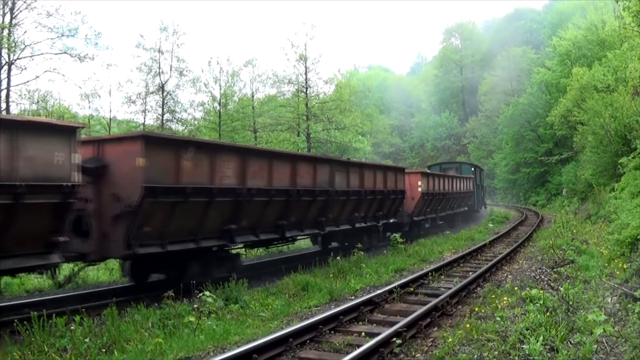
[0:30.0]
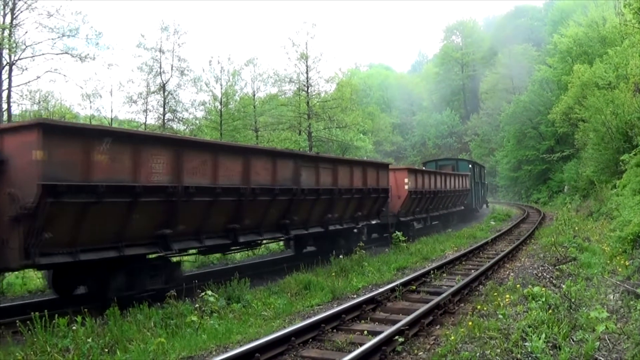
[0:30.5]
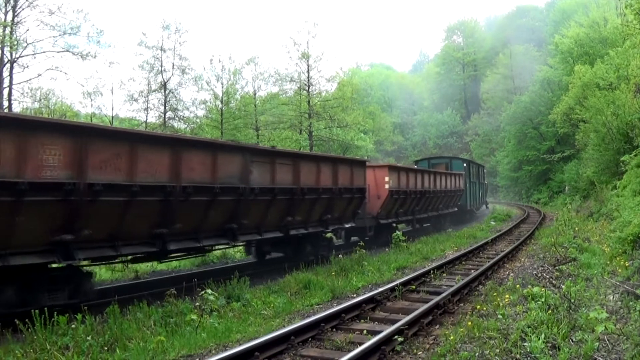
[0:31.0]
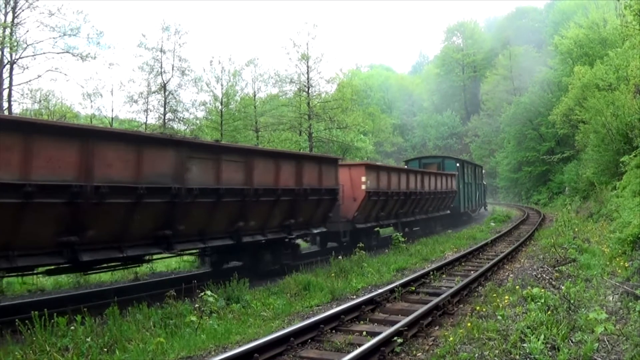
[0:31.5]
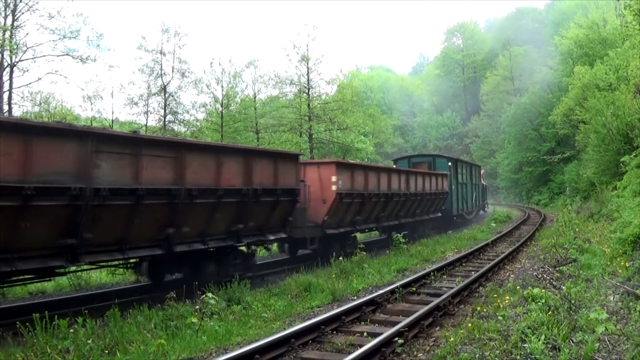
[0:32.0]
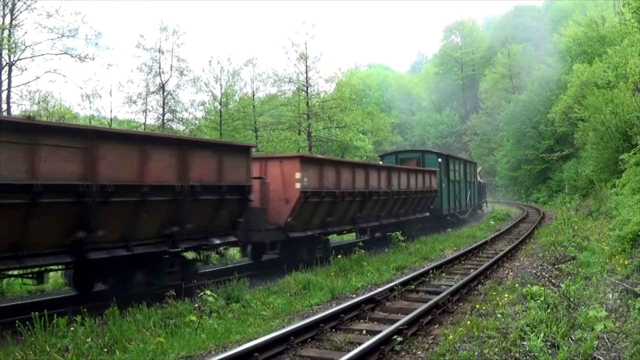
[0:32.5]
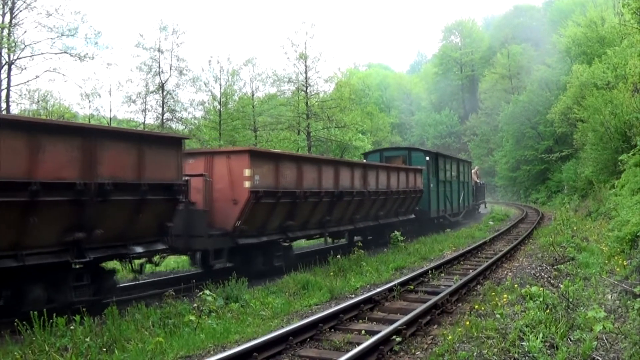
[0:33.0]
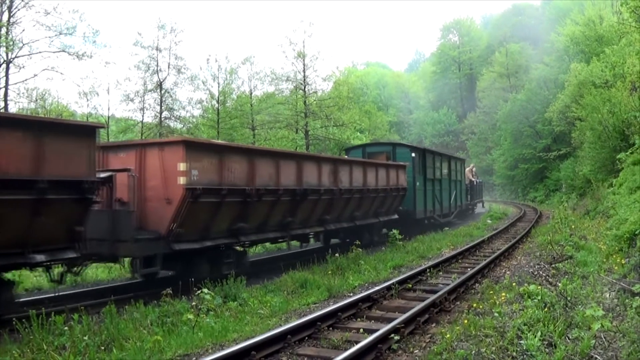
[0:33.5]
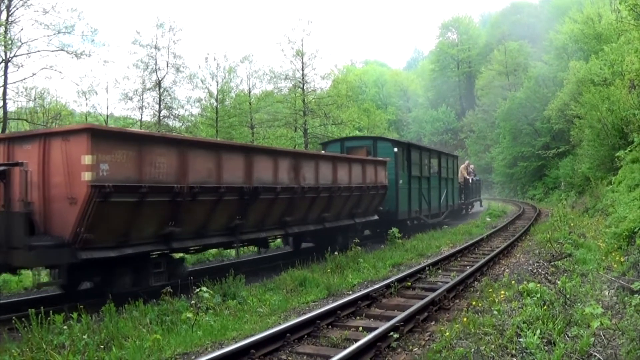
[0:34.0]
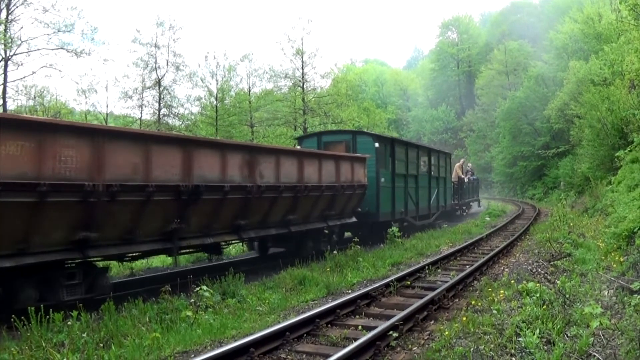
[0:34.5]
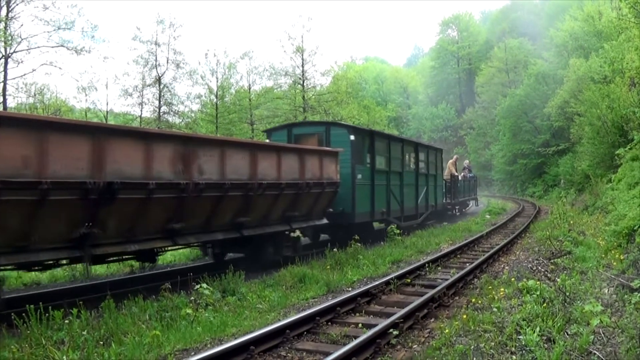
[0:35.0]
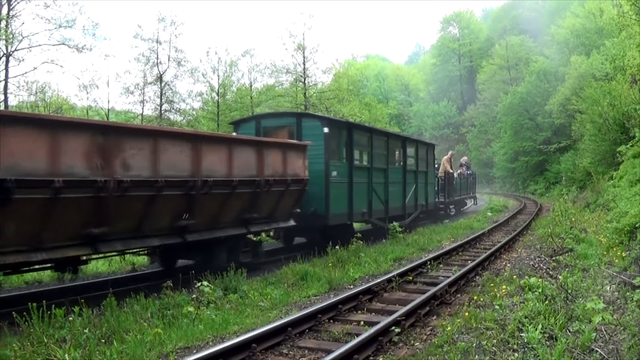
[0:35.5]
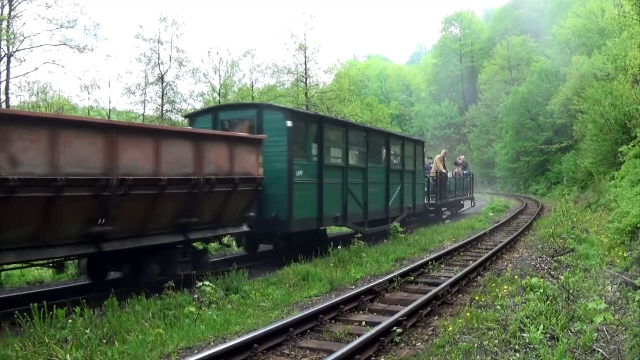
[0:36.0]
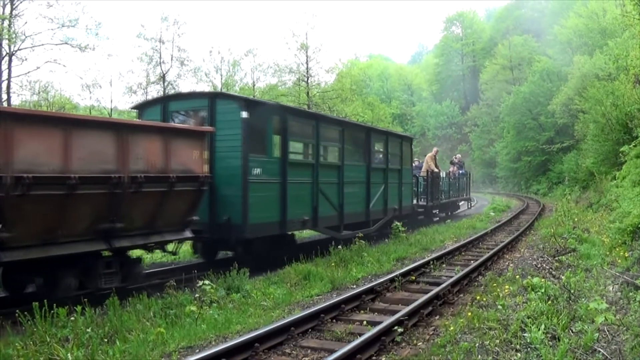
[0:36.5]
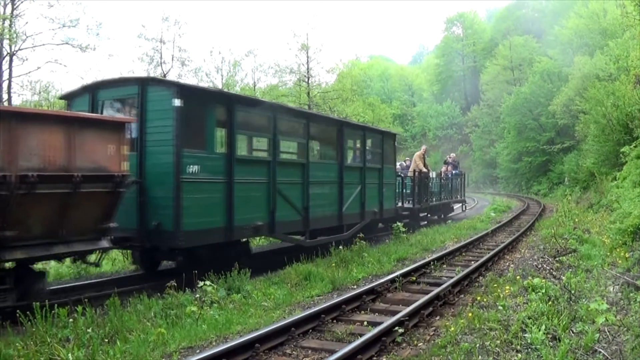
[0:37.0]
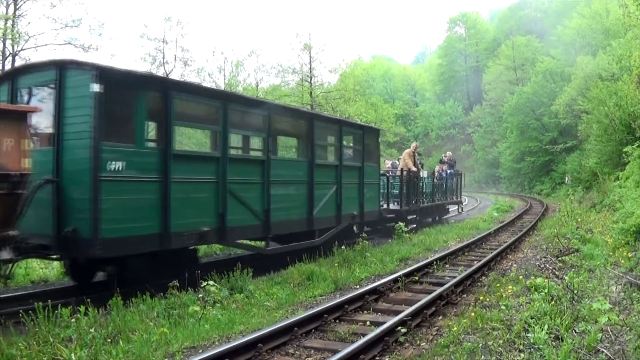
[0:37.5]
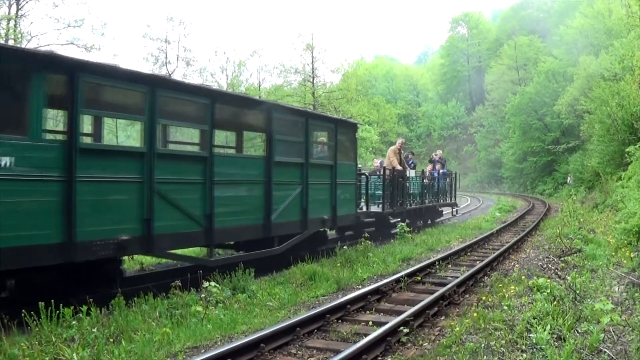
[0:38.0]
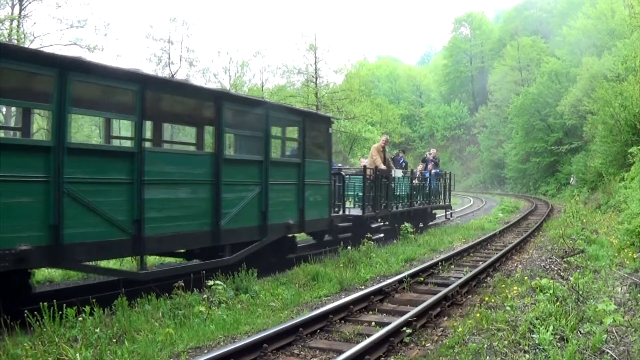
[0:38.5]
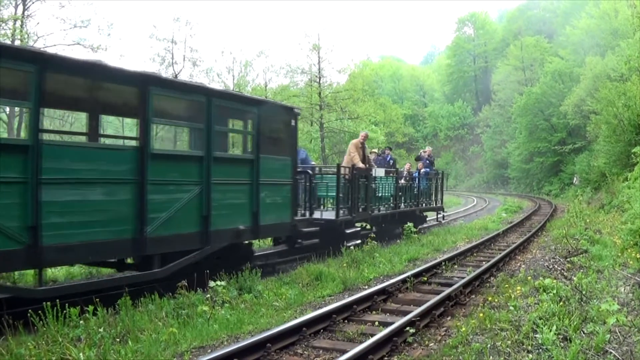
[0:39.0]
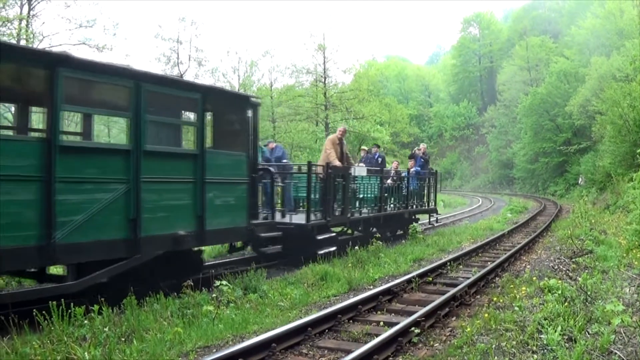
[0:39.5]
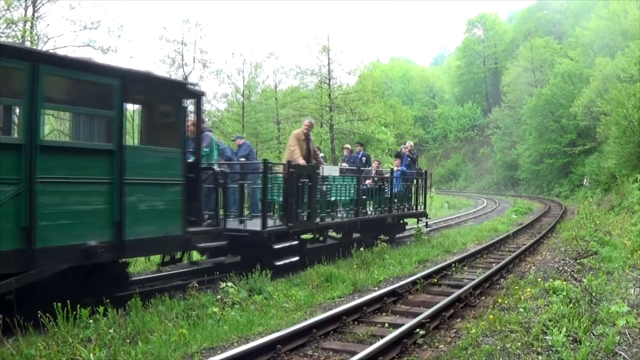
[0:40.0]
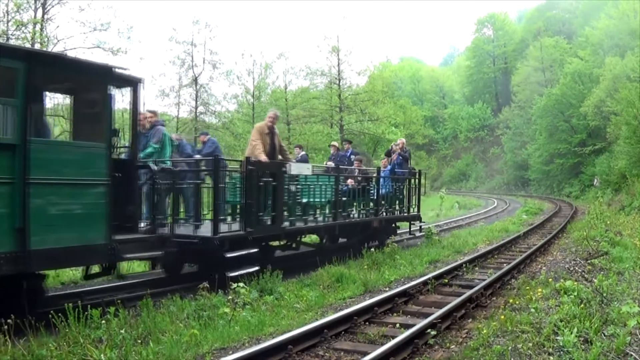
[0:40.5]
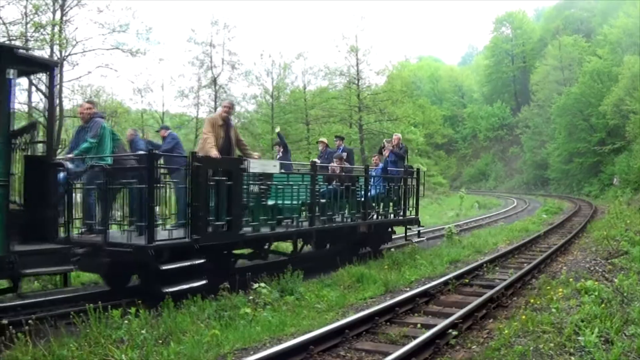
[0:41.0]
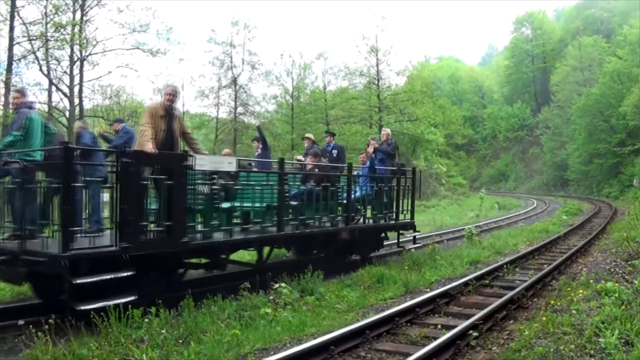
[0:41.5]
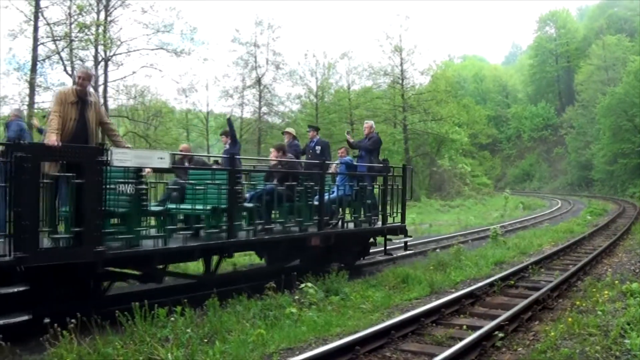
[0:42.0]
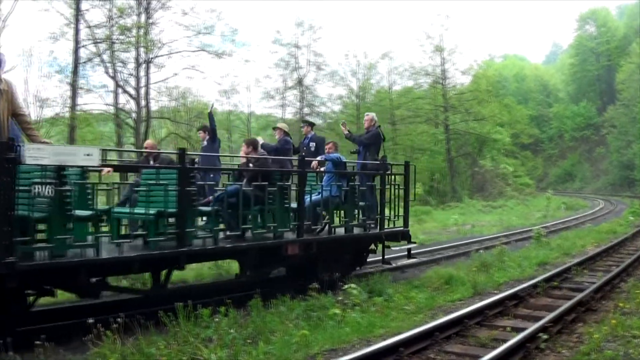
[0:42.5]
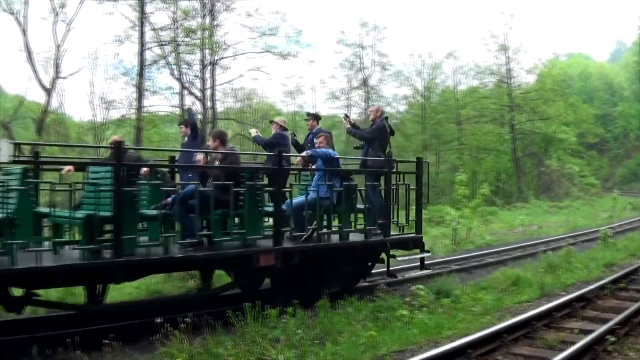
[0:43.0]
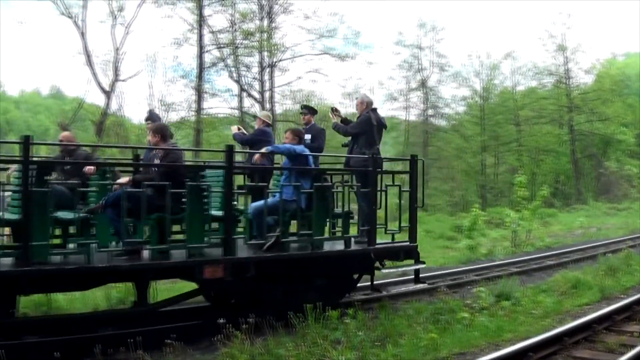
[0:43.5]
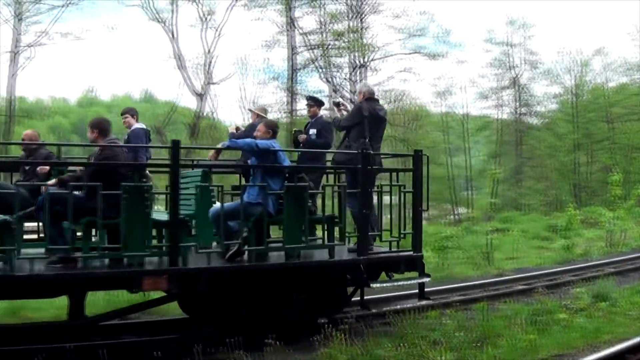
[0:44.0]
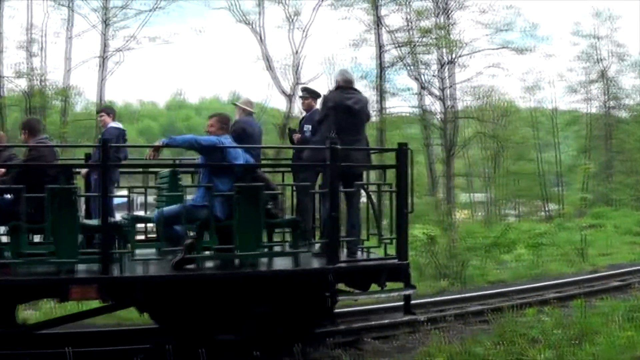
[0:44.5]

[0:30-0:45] The coal cars go by and reveal two more cars at the back of the train: a riding car and an open car, which are not coal cars, indicating that this is a tourist train rather than a working coal train. The setting is wooded.